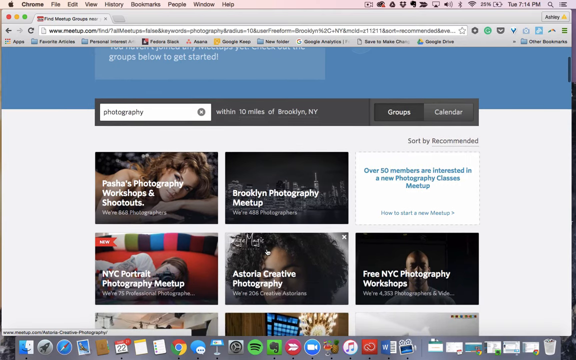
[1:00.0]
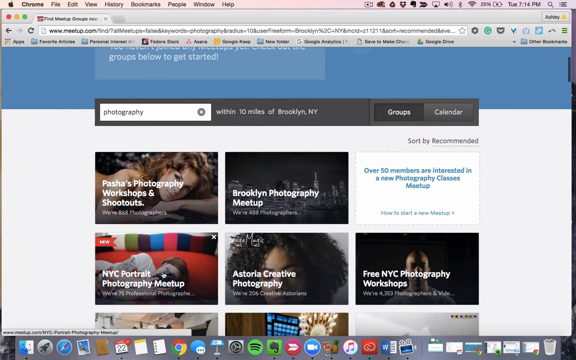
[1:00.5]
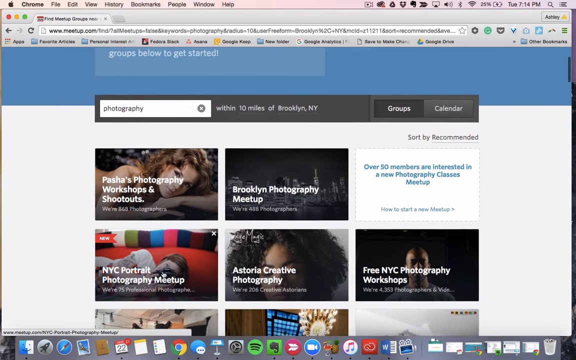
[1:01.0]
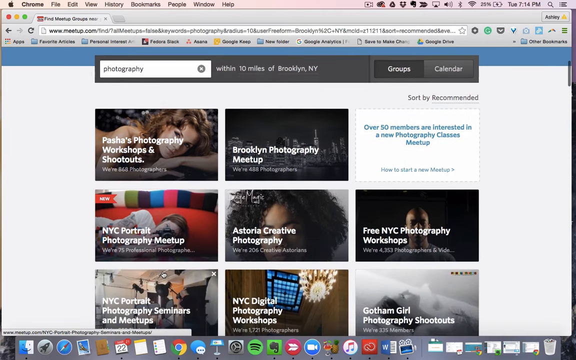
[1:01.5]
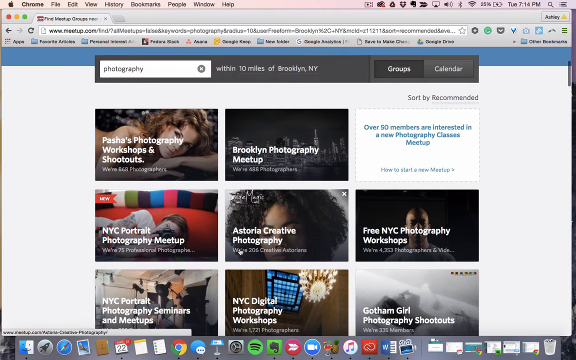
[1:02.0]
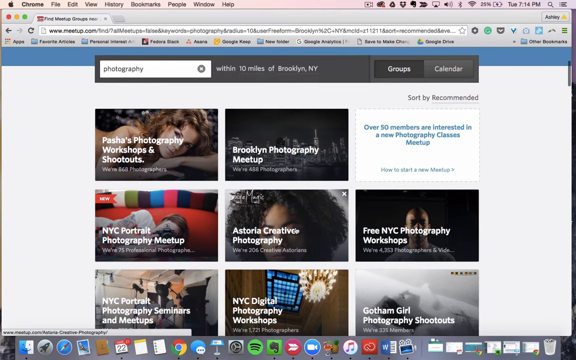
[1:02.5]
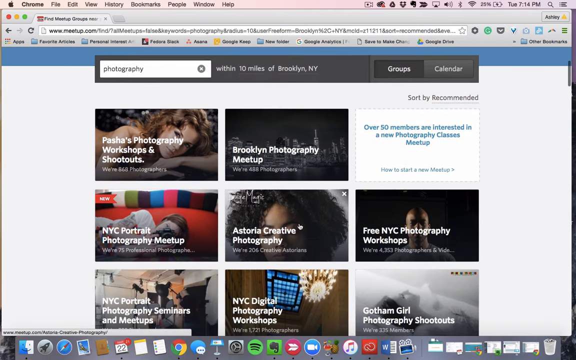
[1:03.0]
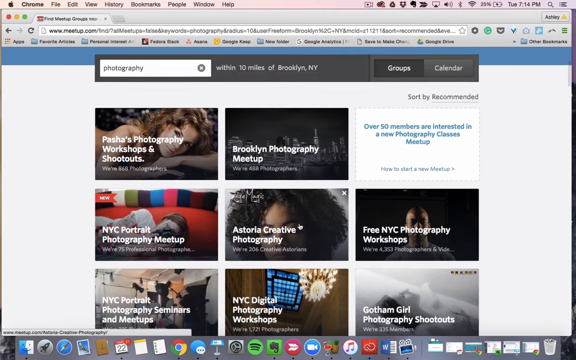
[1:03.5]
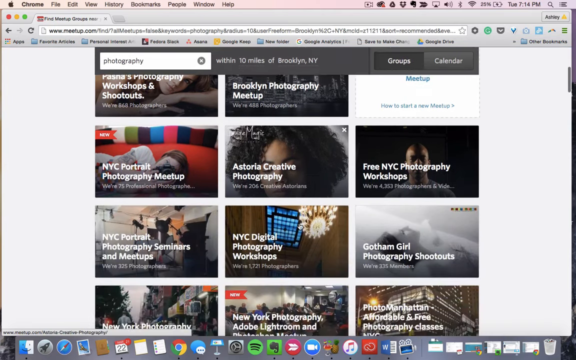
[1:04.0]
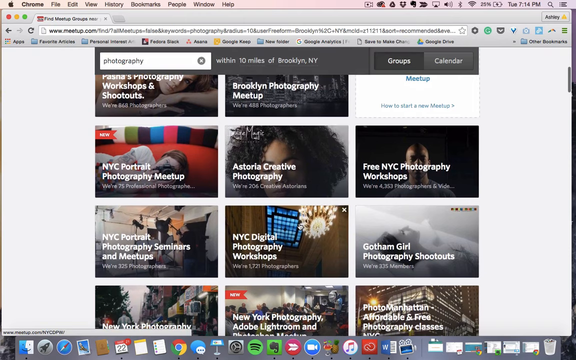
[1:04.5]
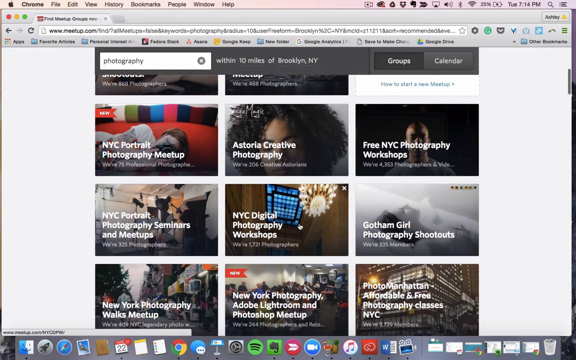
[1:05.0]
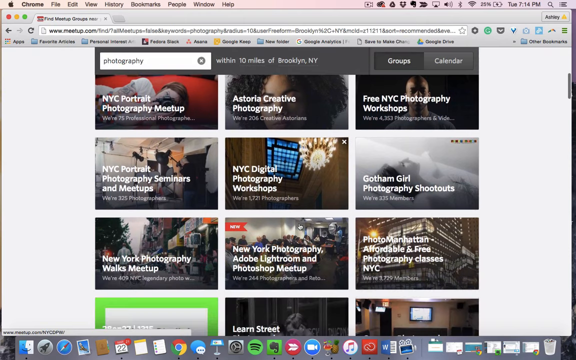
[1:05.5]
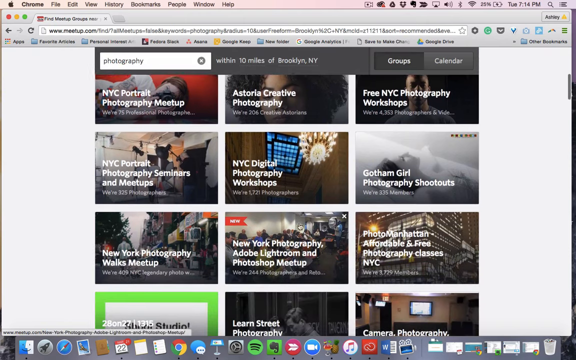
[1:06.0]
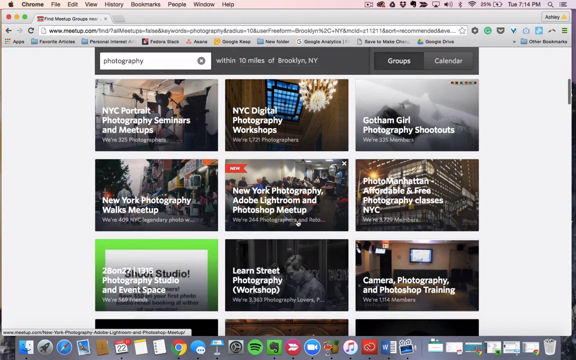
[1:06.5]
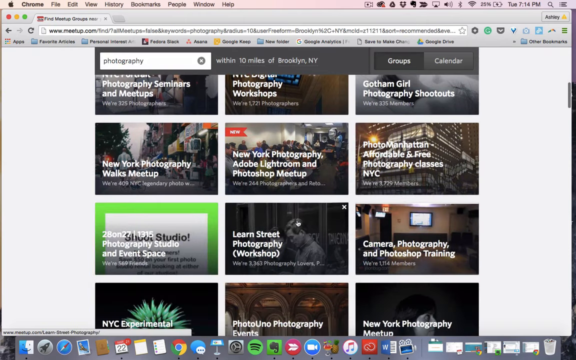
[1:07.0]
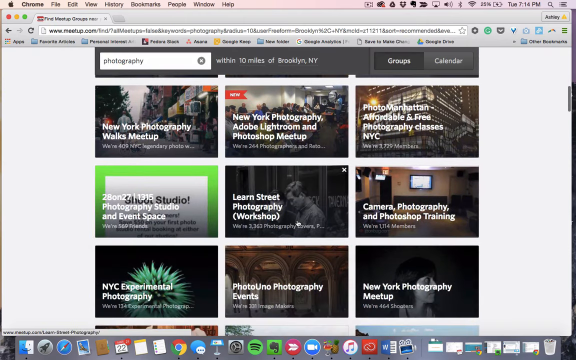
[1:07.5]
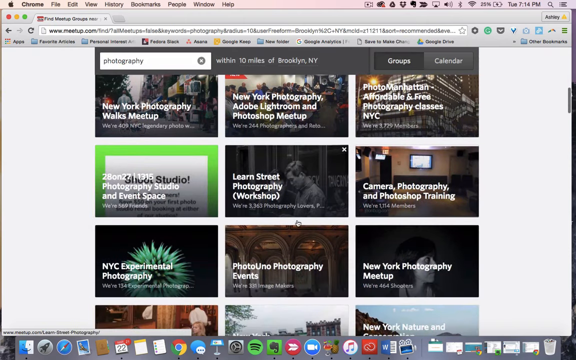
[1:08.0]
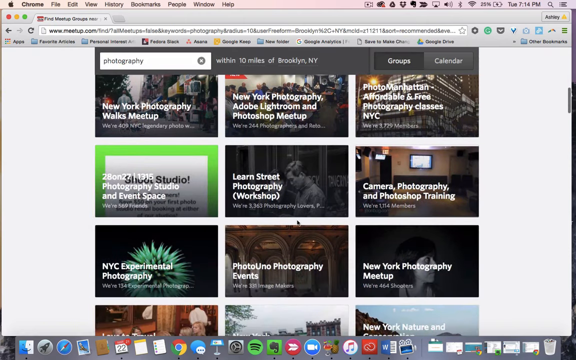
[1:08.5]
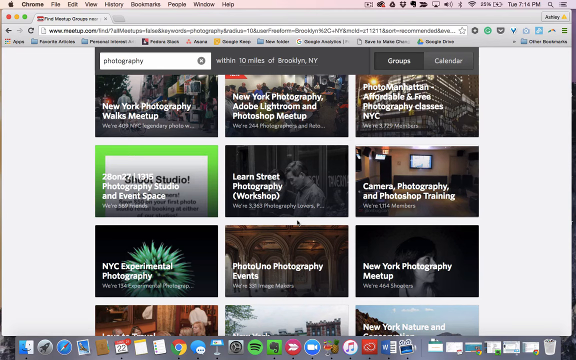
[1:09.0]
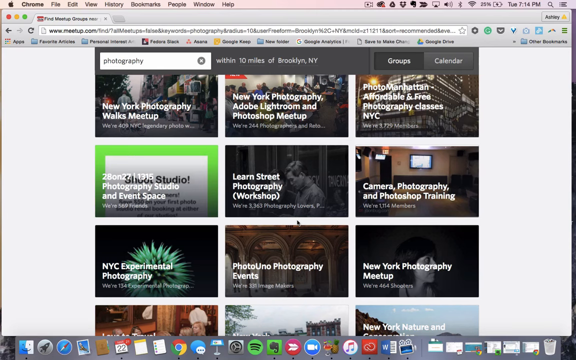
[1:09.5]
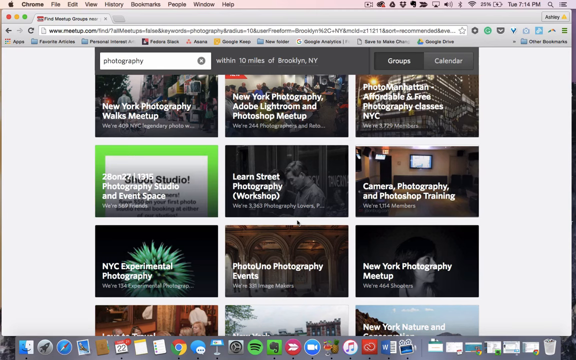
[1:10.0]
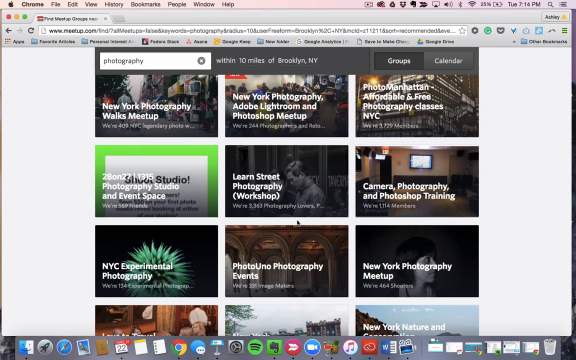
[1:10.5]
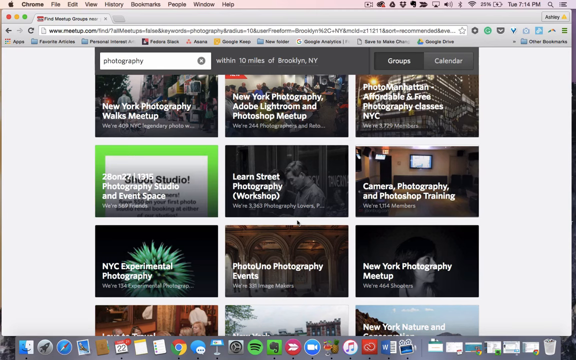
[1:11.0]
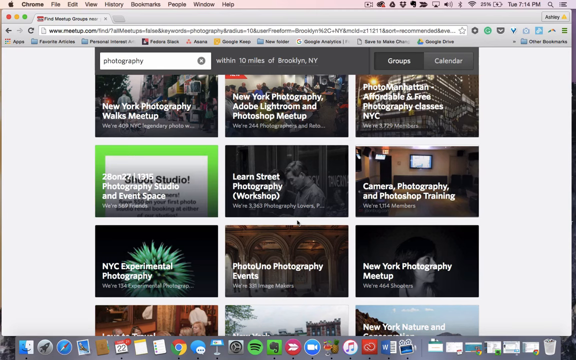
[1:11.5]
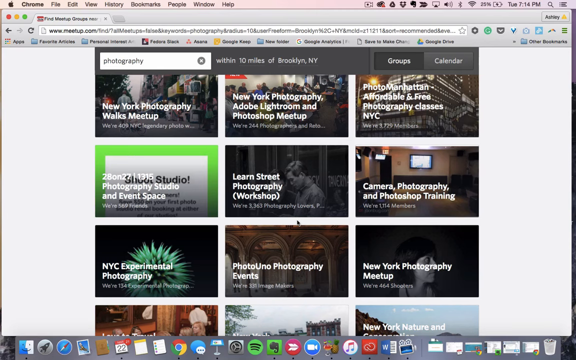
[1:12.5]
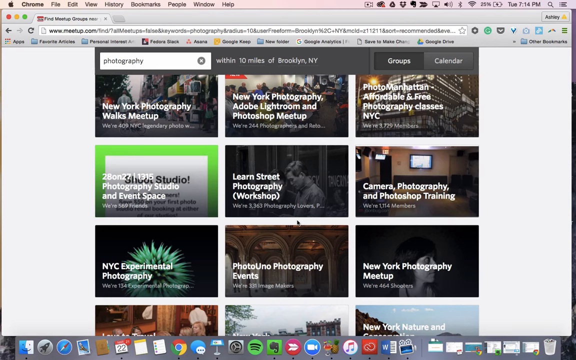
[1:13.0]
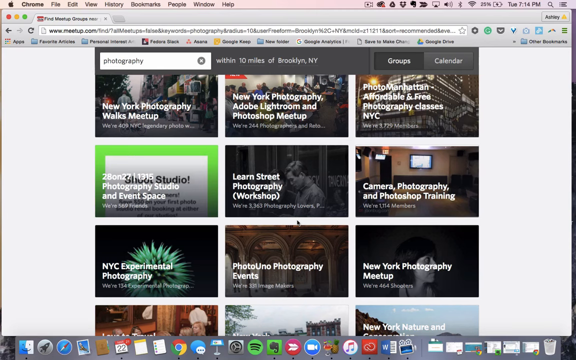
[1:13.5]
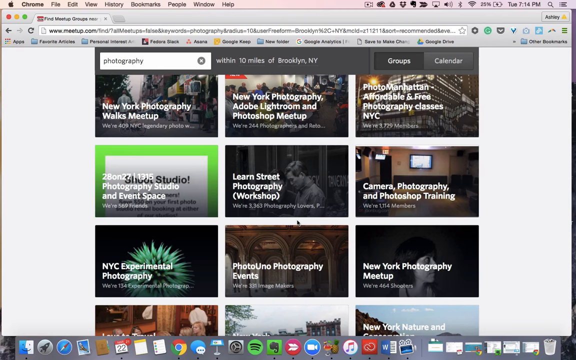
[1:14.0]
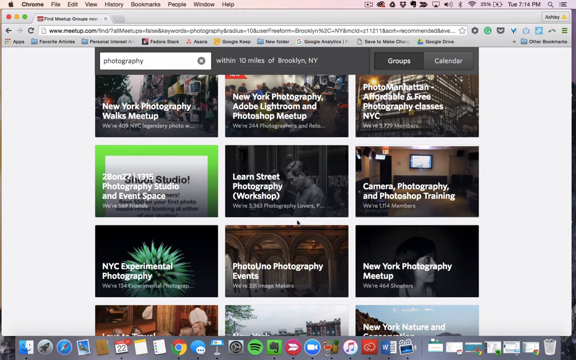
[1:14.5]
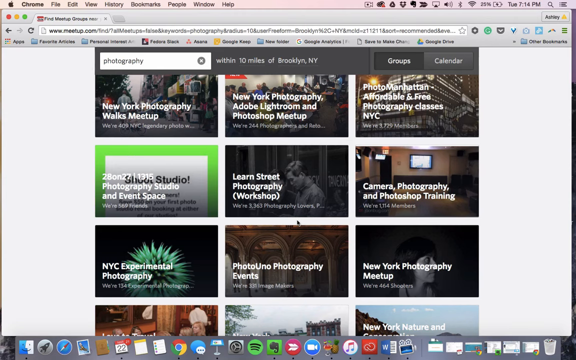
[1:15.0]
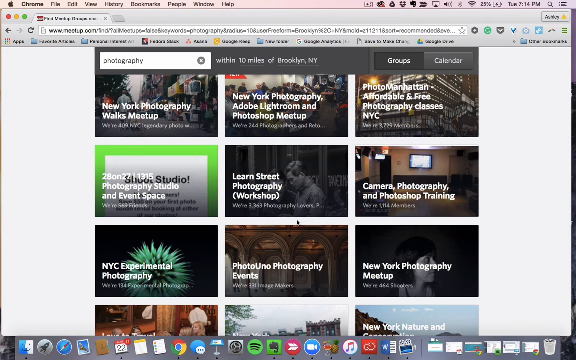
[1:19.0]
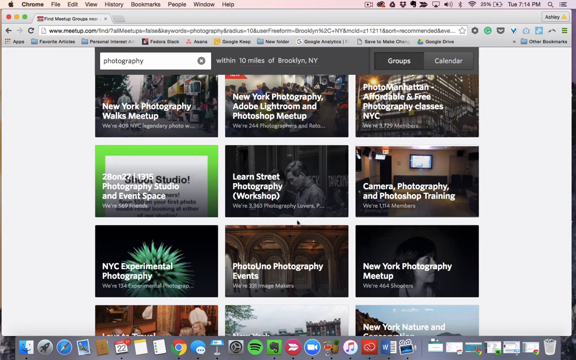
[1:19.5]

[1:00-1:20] The photography search results are scrolled down. After Pasha's Photography Workout and Shootout comes Brooklyn Photography Makeup, and below that a New York Portrait Photography Meetup, then Austria Creative Photograph and Free NYC Photography Workshops. Below these are three more that are not clearly visible. The user keeps scrolling down to further options: NYC Portrait Photography Seminars and Meetups, NYC Digital Photography Workshop and Gotham Girl Photography Shootouts, then the New York Photography Works Meetup and New York Photography Adopt in Lightroom and Photoshop Meetup, followed by Photoshop Photo Manhattan Affordable and Freed Photography Classes.